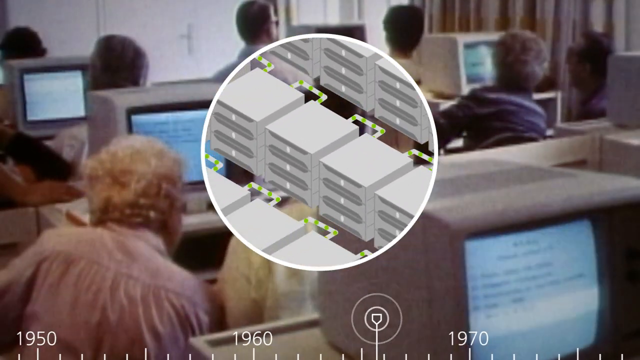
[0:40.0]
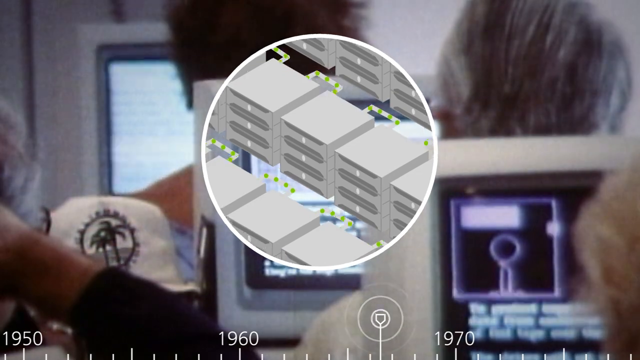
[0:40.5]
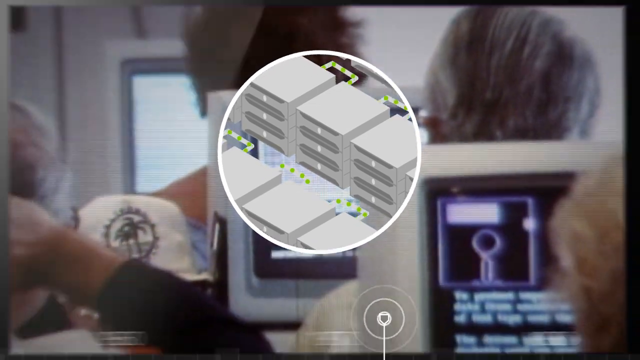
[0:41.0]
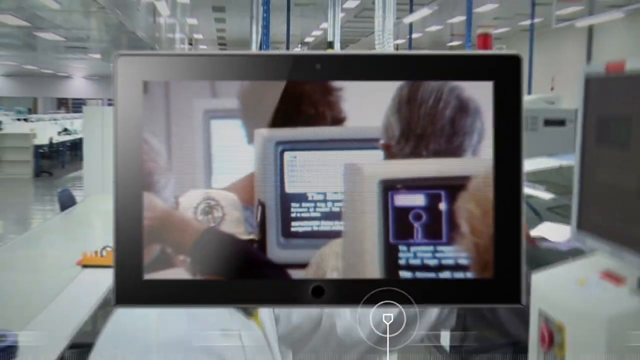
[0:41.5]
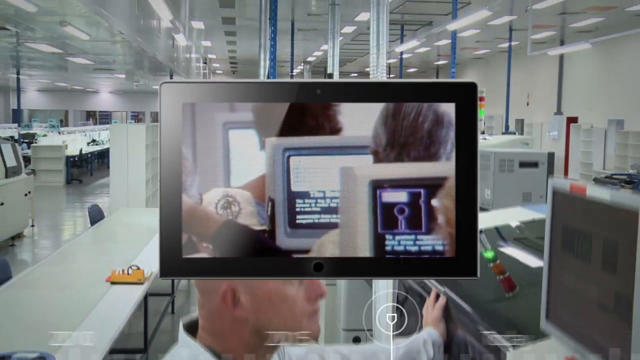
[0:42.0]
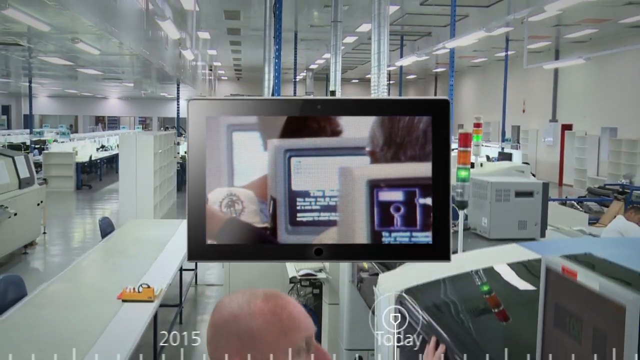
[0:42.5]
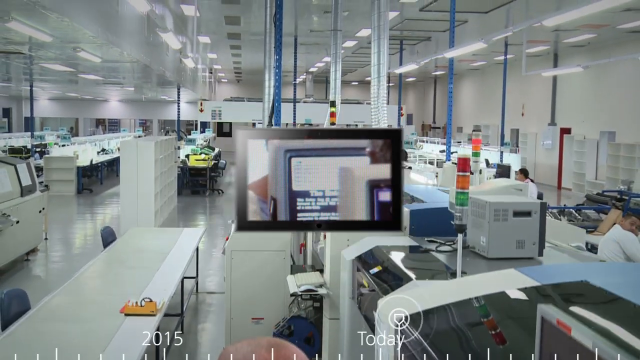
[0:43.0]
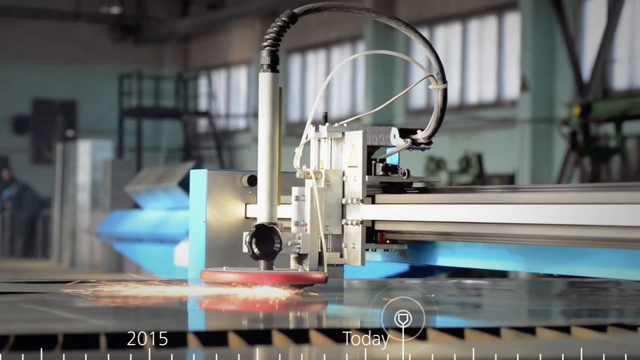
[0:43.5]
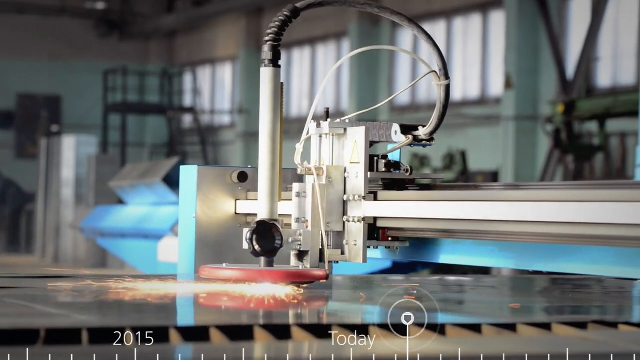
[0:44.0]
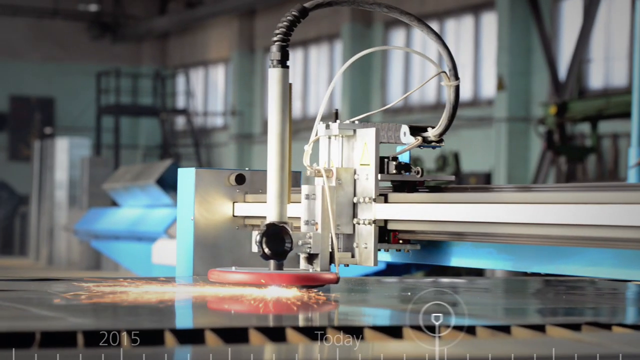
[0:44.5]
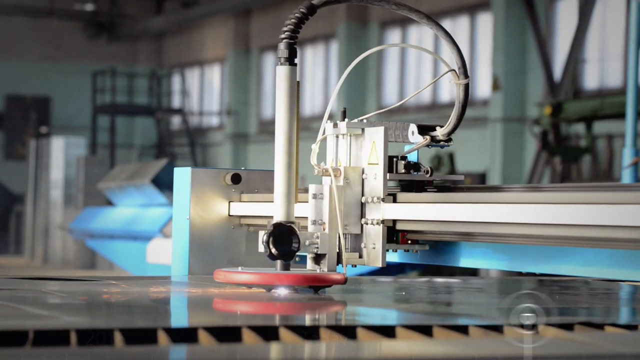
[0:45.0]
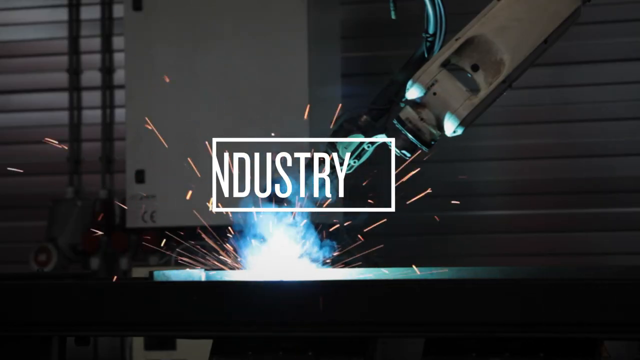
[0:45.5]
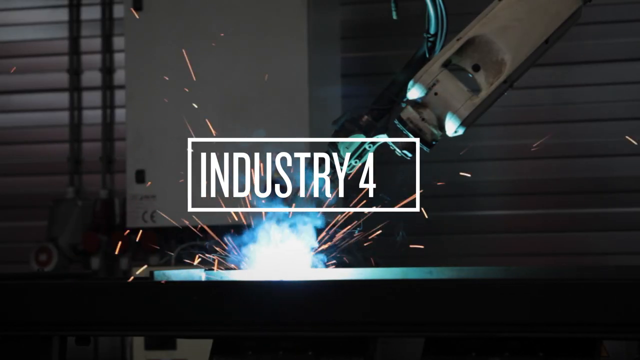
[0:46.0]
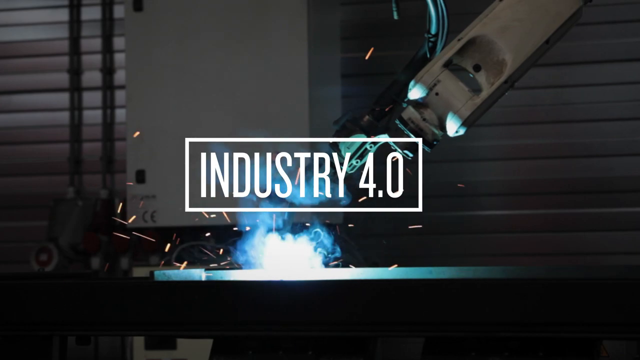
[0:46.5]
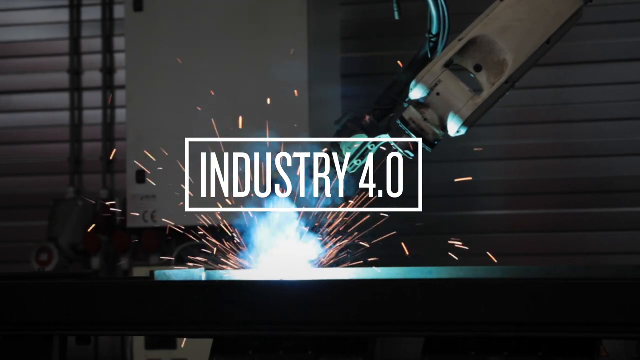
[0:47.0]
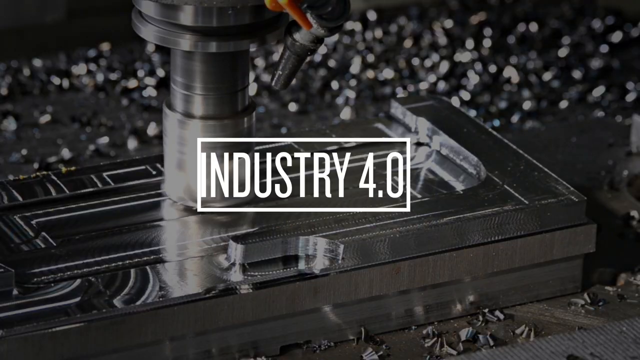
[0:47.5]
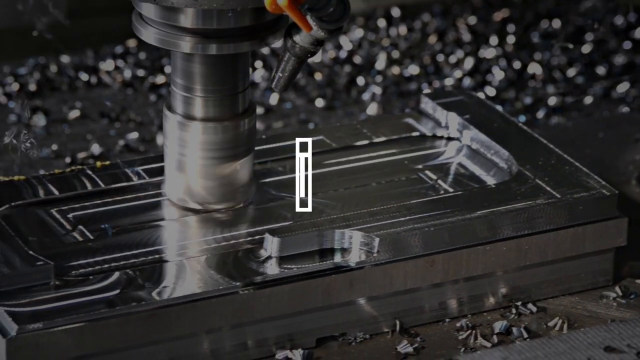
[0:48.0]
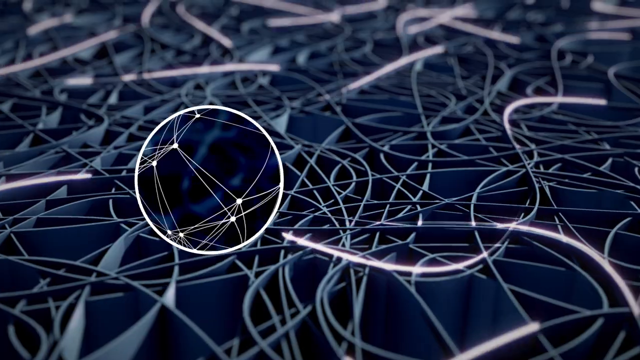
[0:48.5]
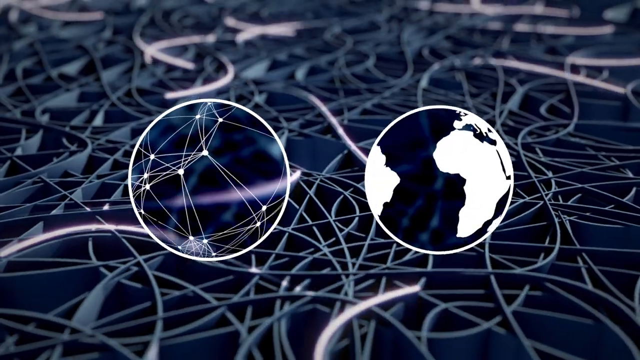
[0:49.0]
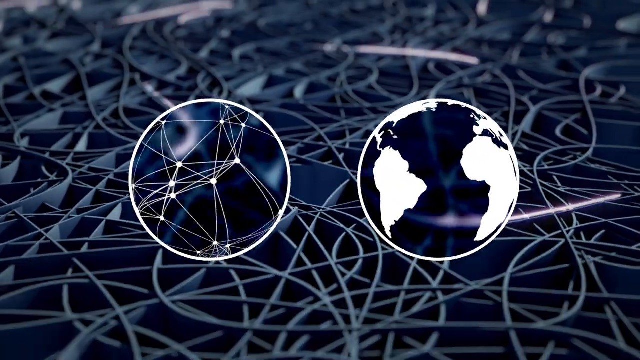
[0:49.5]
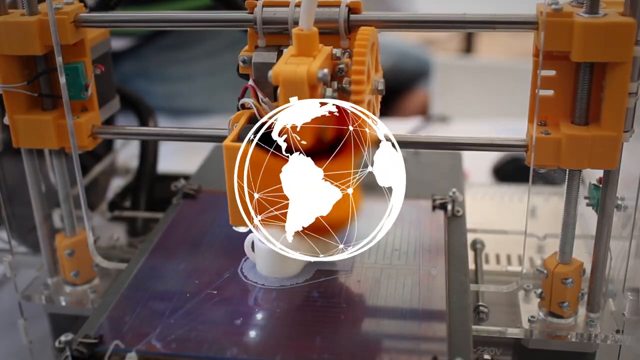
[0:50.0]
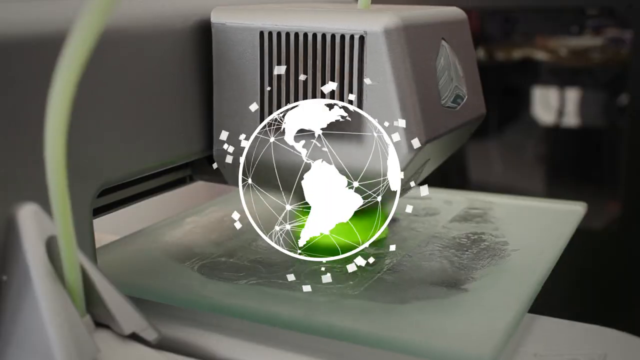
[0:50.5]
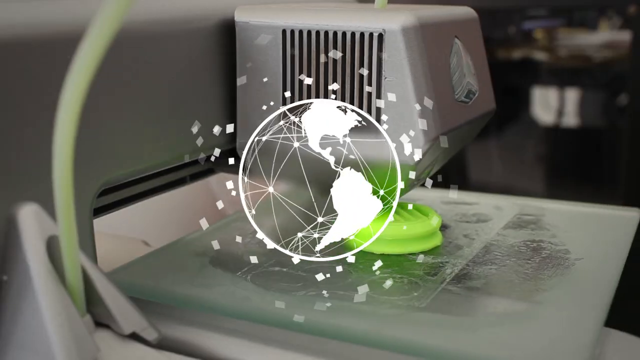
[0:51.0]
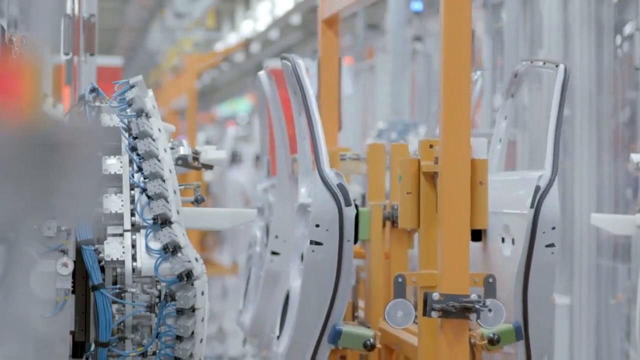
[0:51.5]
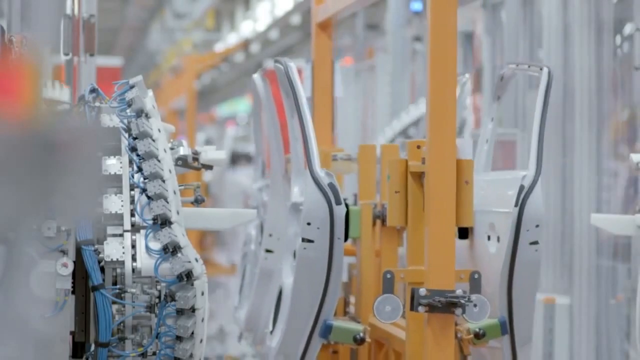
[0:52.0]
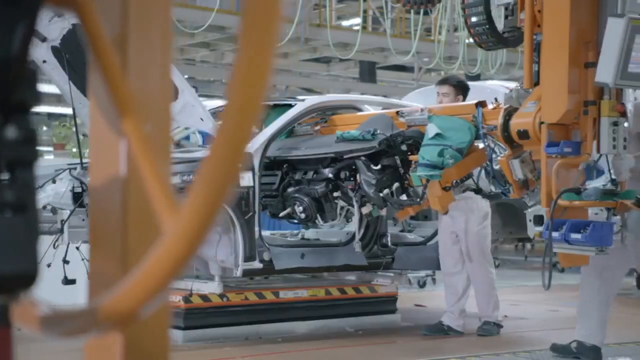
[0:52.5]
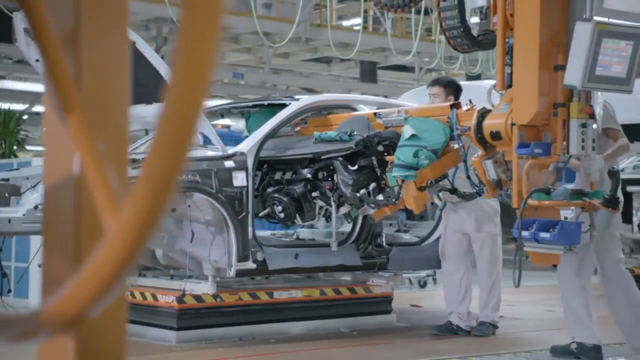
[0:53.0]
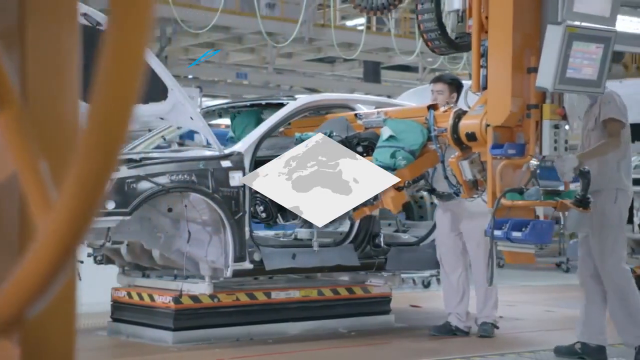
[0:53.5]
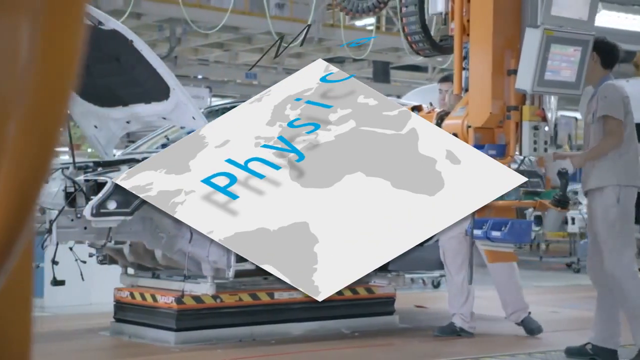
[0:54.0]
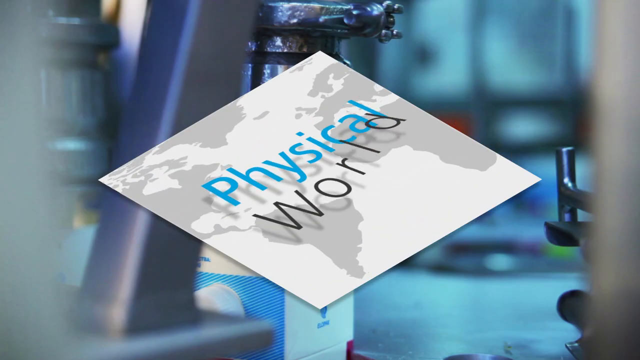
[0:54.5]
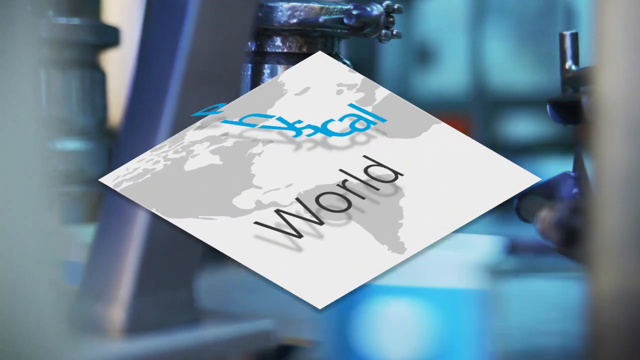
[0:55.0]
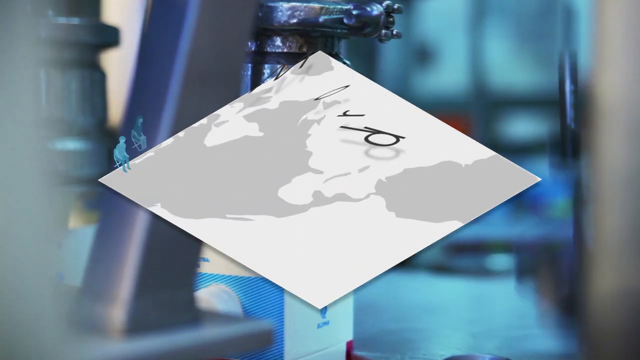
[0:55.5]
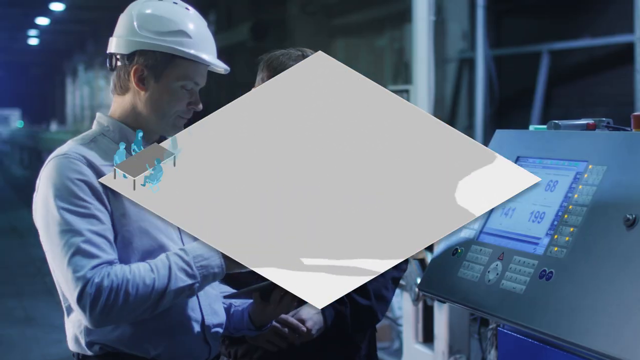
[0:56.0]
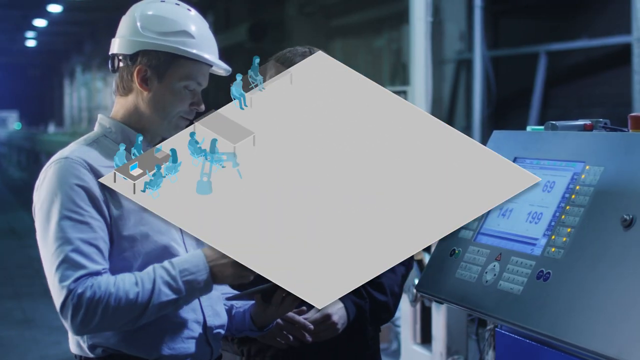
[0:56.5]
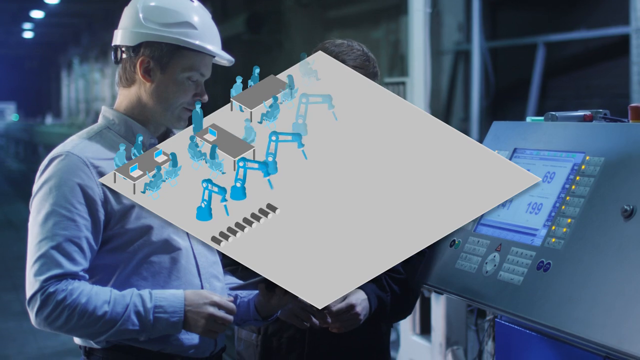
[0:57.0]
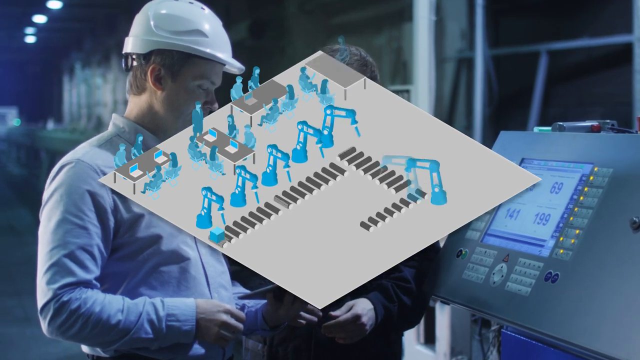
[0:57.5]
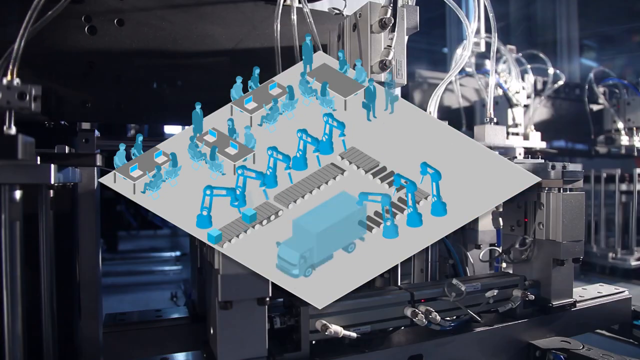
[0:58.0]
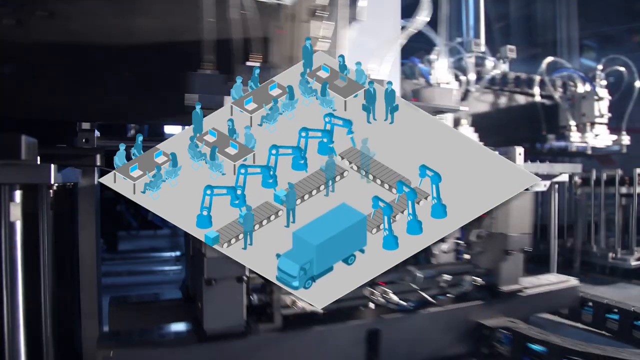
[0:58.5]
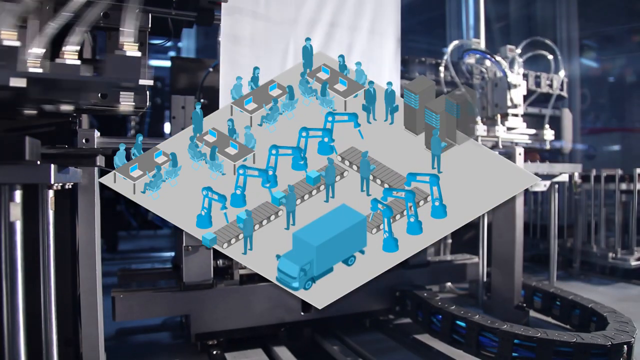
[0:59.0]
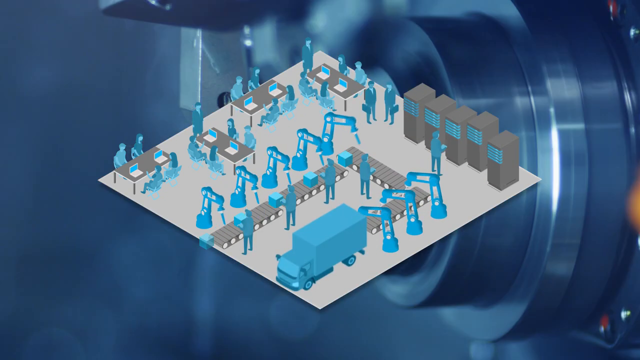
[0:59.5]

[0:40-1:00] The background shows people working on computers, with a small circle in the middle showing different types of electronics with parts moving. A different-looking computer screen then appears in the middle, apparently showing other types of computers, and the background changes to more of an office setting look. Next come different types of equipment that look like they are being used, with light coming from some of the equipment. A box pops up on the screen that says "industry" and then the number "4.0". That image goes down and turns into an image of a world, with more machinery in the background, and the machinery appears to be working on some type of car.